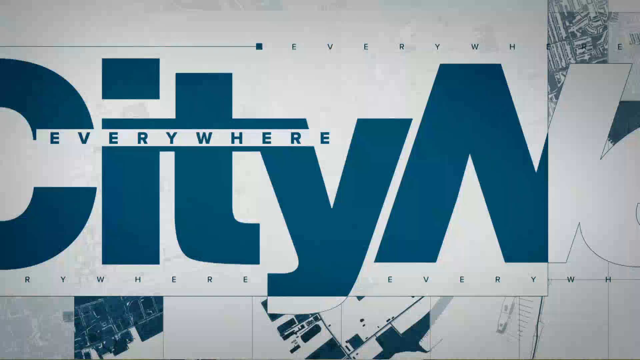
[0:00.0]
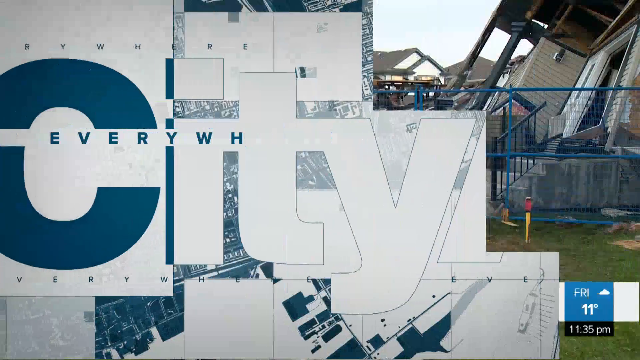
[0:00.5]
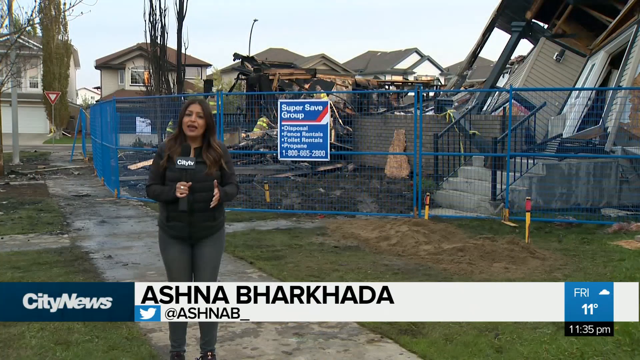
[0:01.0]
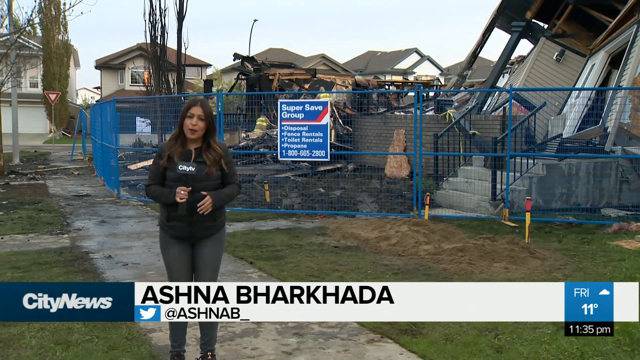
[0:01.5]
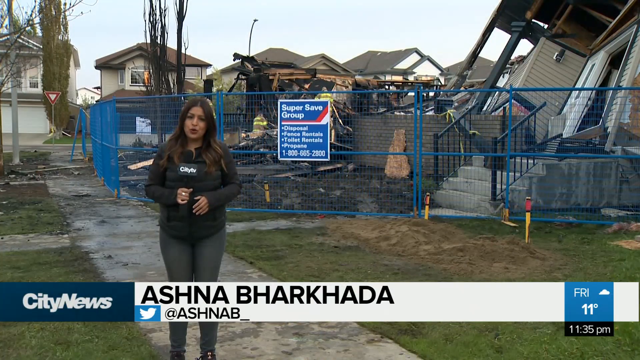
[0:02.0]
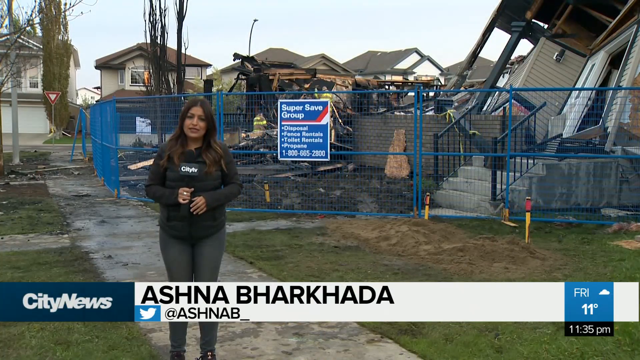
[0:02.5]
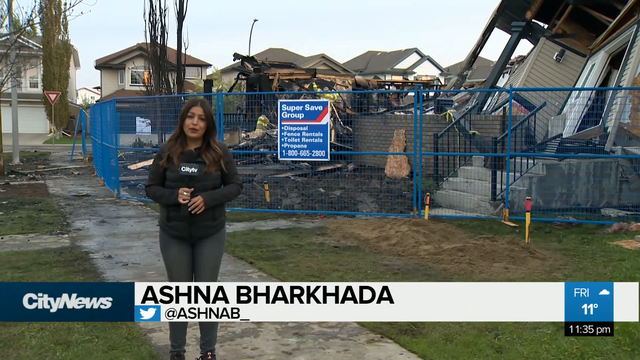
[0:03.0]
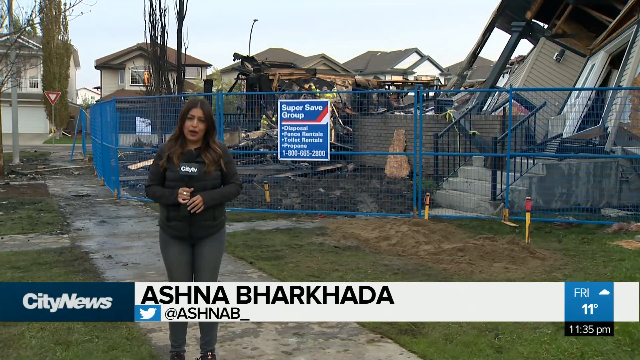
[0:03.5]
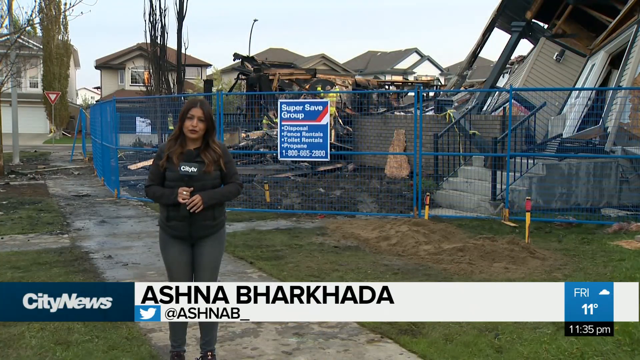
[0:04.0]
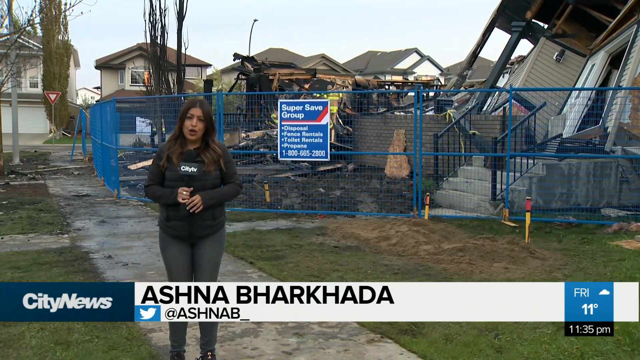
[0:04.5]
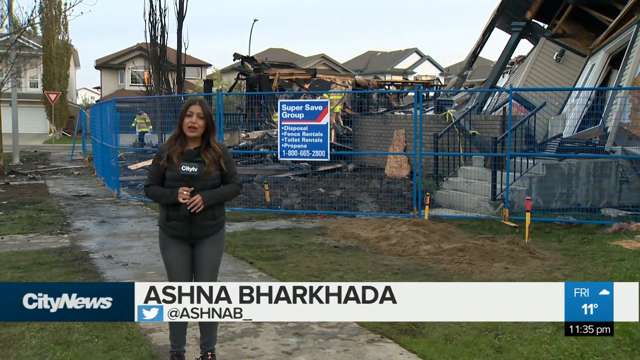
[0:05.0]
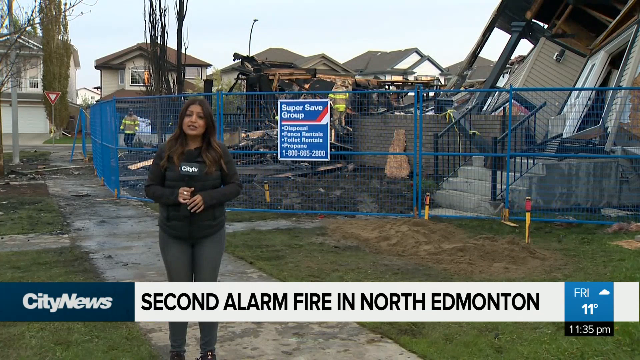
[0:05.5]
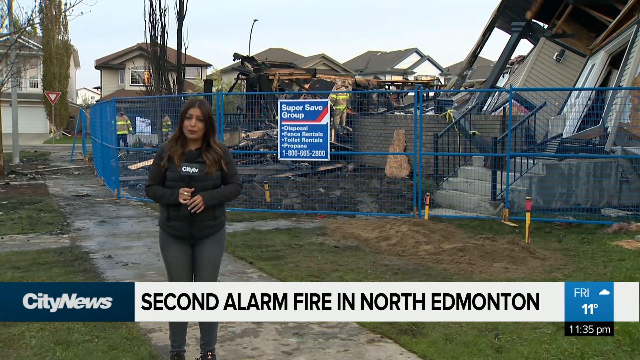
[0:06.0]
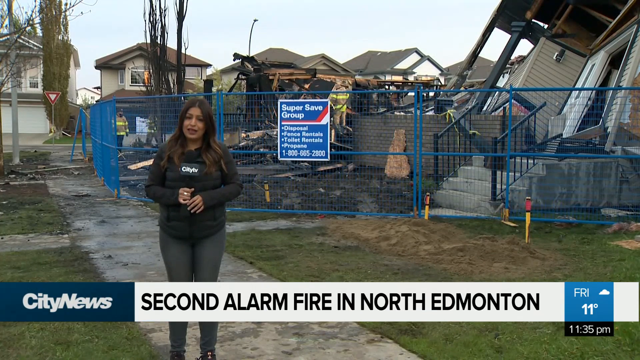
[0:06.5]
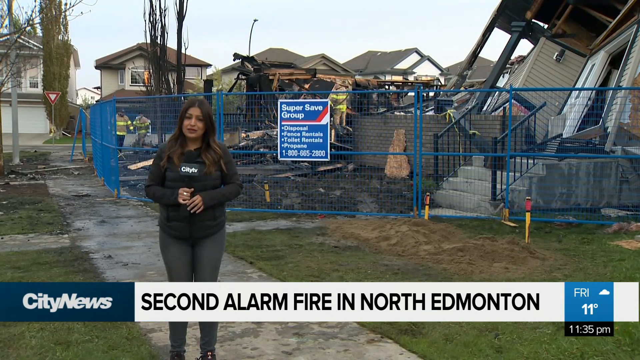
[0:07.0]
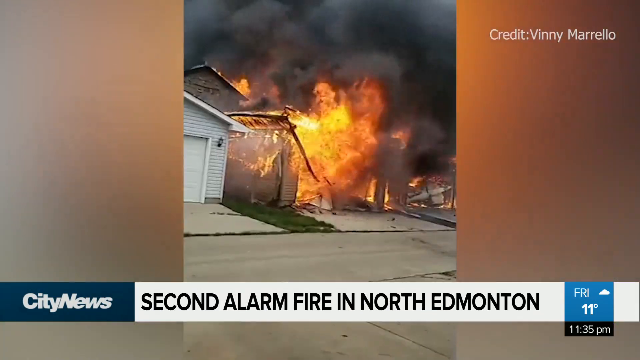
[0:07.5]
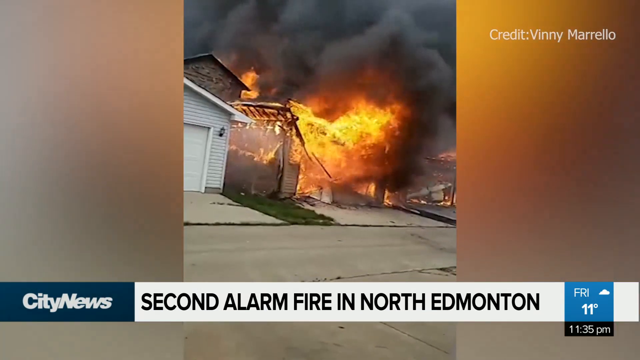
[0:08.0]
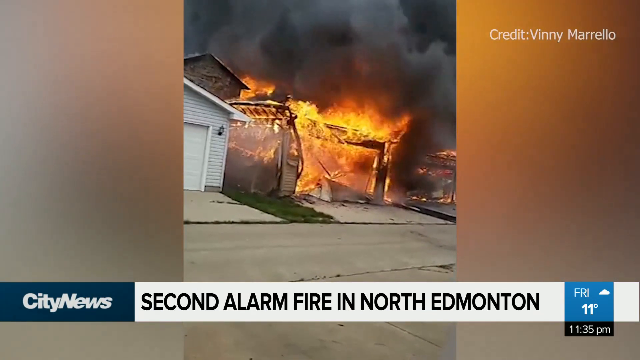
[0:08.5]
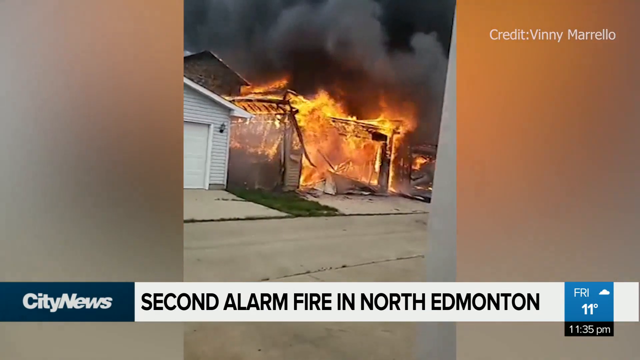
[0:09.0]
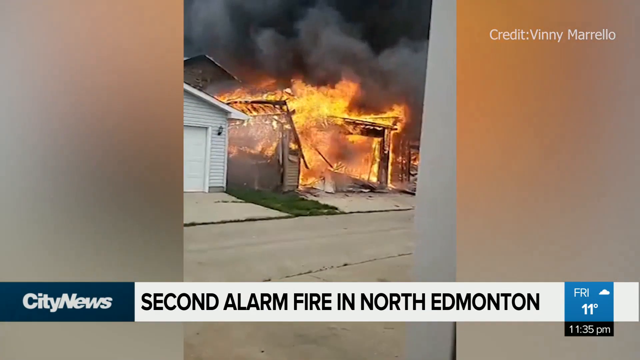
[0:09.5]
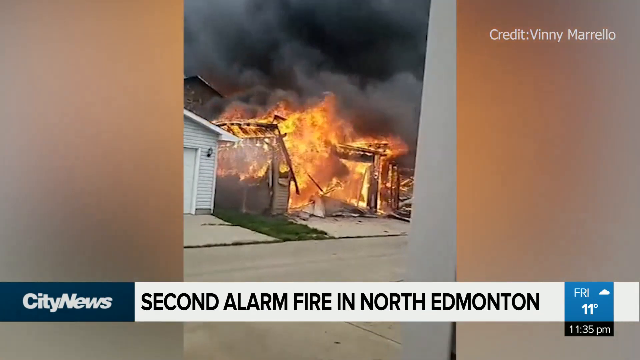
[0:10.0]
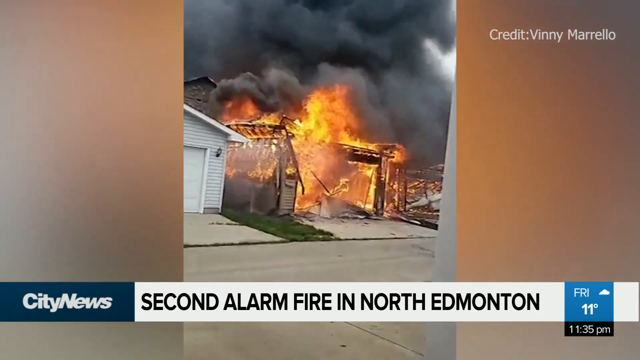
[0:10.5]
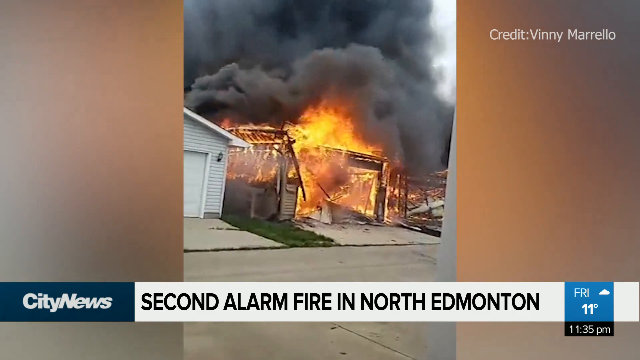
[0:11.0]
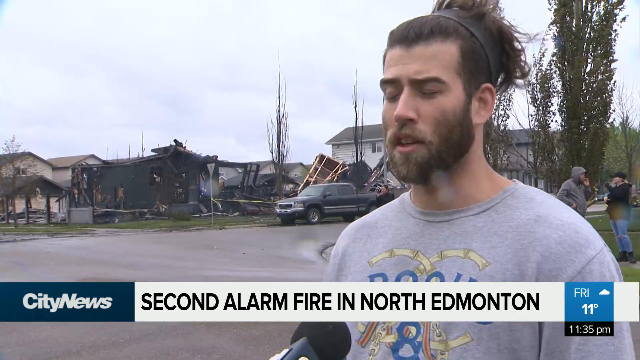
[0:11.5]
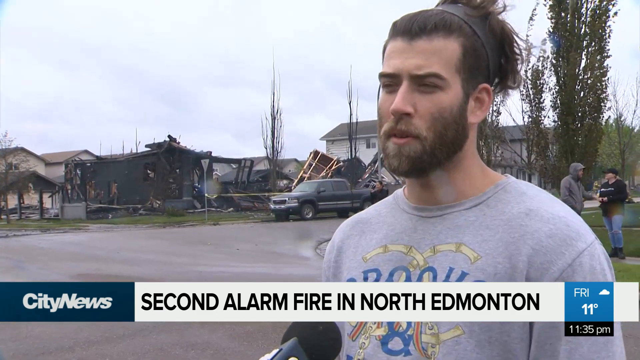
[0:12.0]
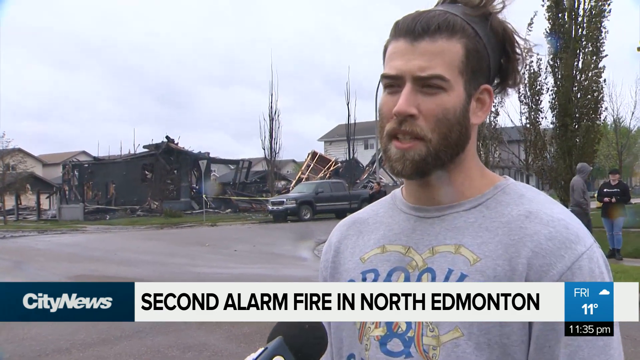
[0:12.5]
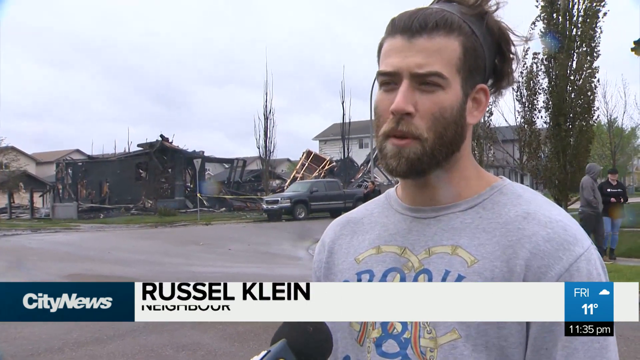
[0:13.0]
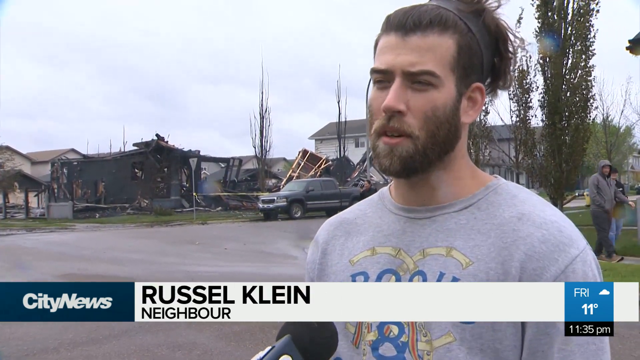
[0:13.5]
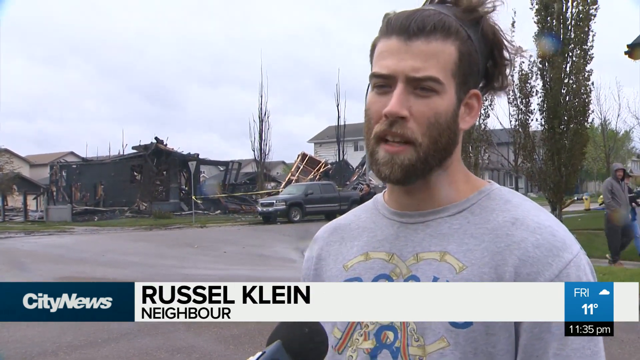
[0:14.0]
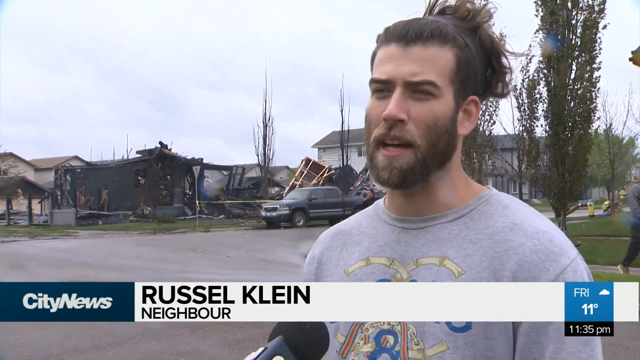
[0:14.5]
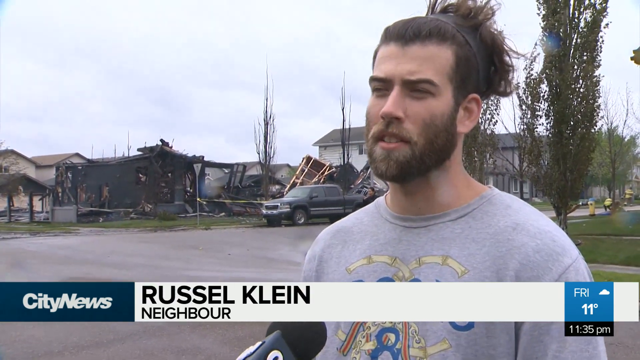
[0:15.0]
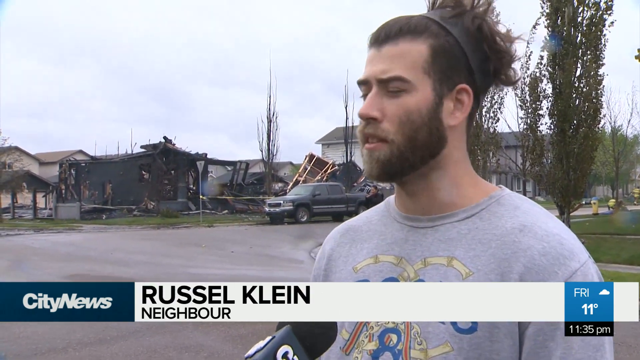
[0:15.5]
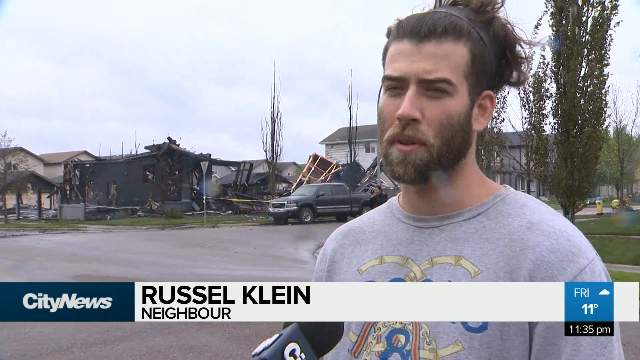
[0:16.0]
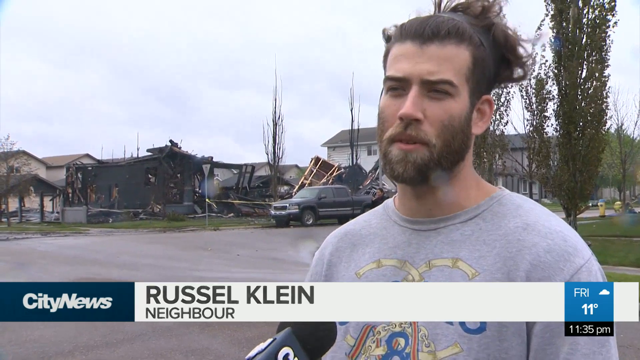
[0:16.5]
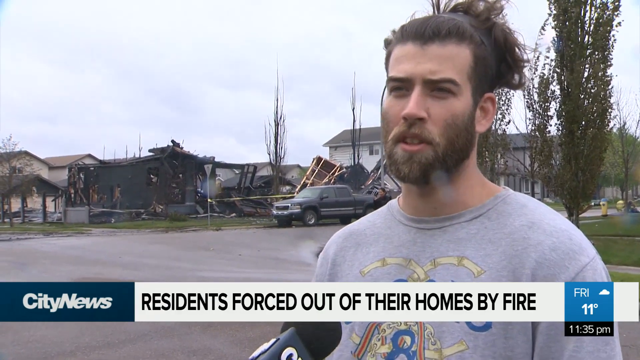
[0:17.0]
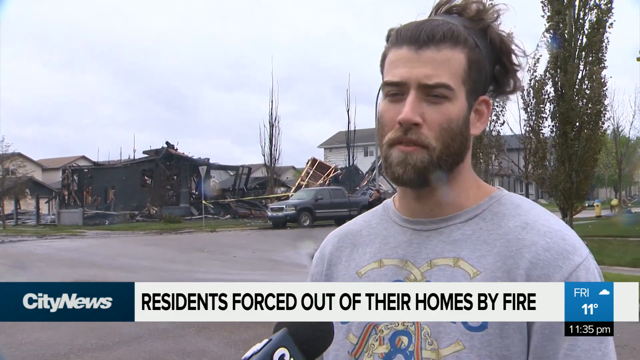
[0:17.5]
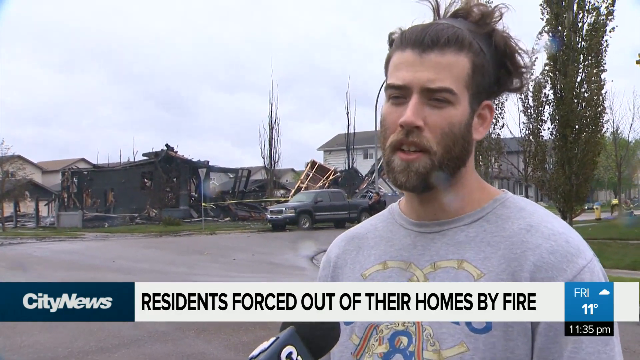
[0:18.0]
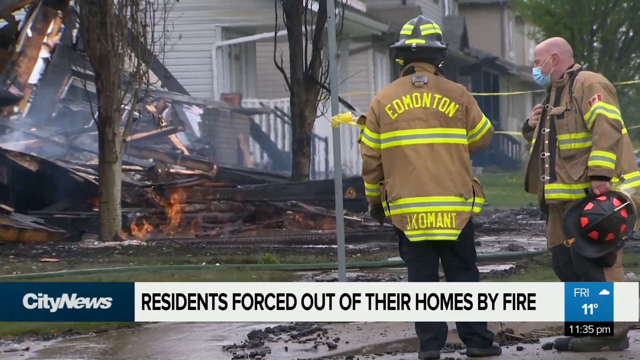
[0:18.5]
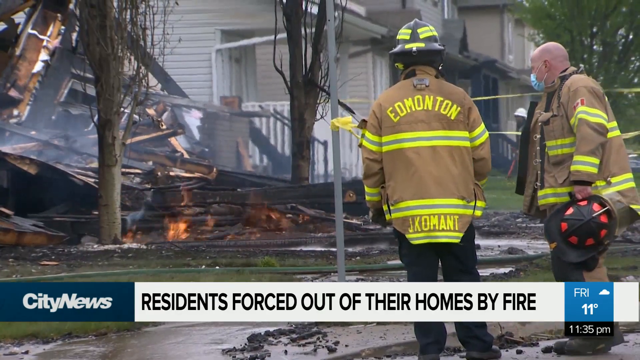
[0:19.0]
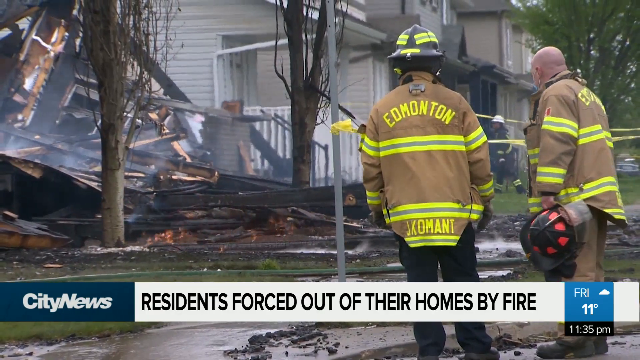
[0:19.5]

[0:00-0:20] A logo for some type of newscast appears, with large blue font across the screen: the word "city" in large blue block letters and small blue letters everywhere. A brunette newscaster in jeans and a long-sleeved shirt is standing out in front of what looks like a demolition site where a house has been torn down. One house almost looks like it is laying down on its side, and apparently they have started to take it down. Behind that is another street with other houses that look to be in fine shape. A blue fence goes around the construction site where the house is being torn down. Apparently a fire caused the damage to this house. A large plume of black smoke is visible. A resident who was near the house fire is then interviewed; he has a man bun.